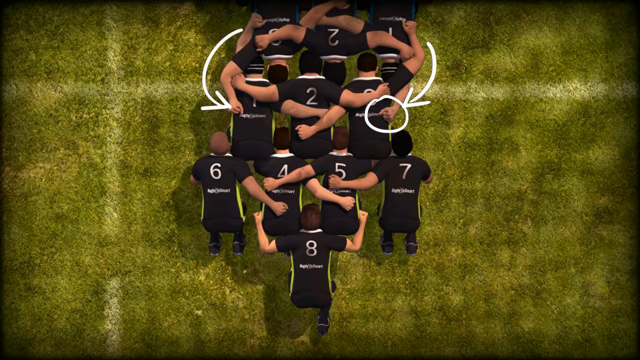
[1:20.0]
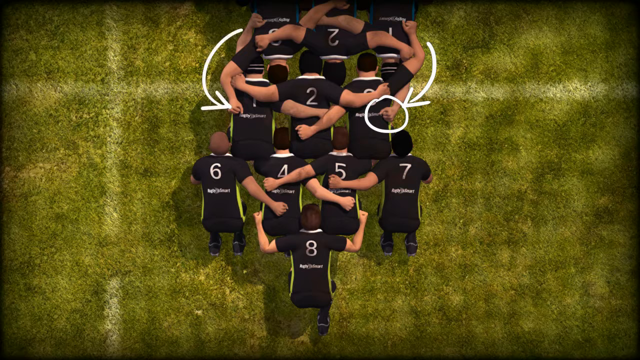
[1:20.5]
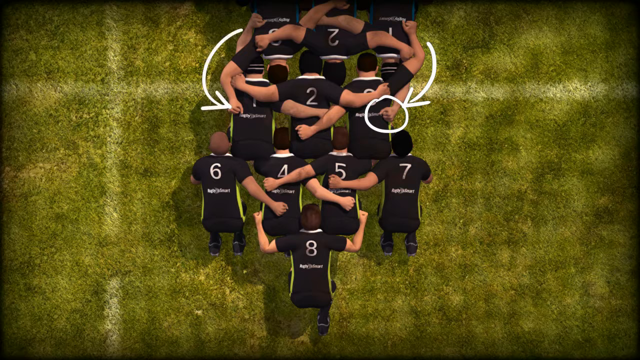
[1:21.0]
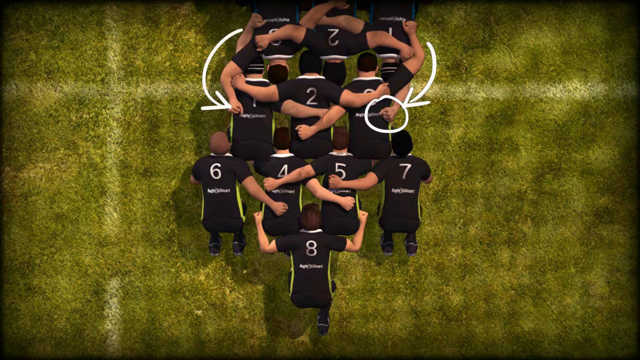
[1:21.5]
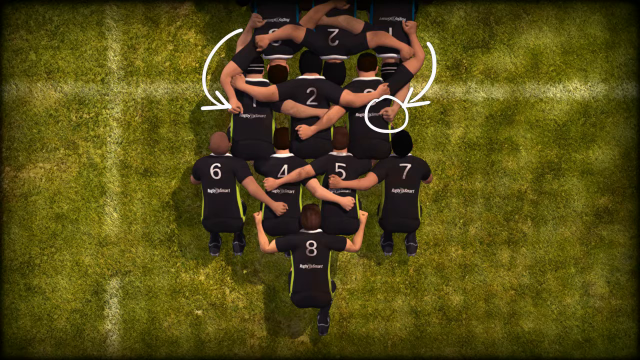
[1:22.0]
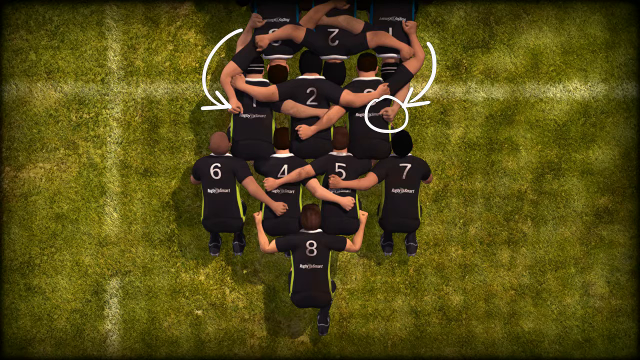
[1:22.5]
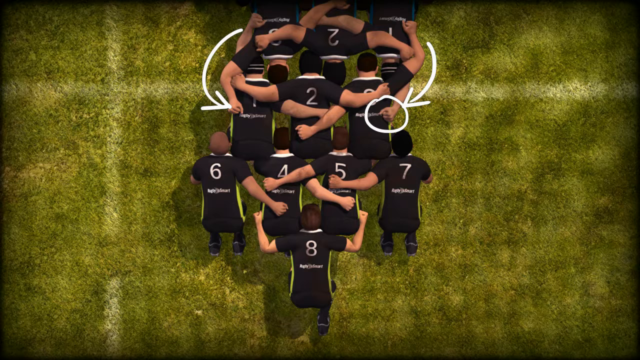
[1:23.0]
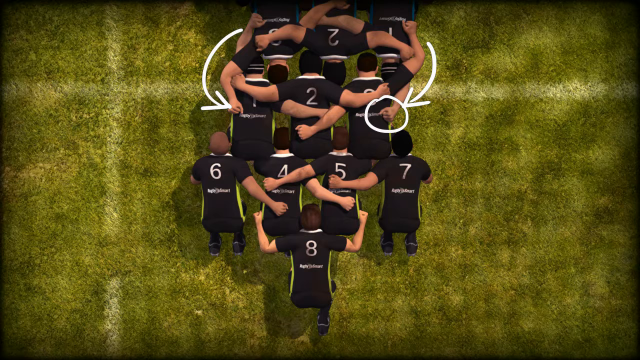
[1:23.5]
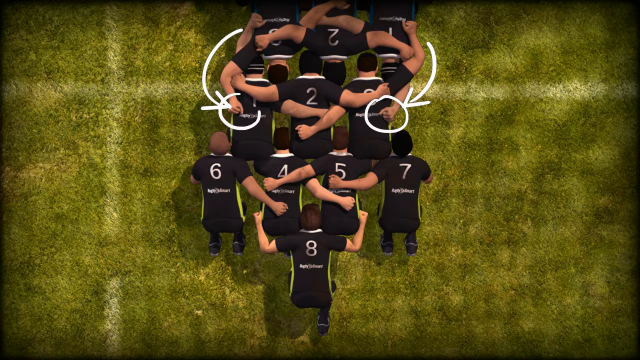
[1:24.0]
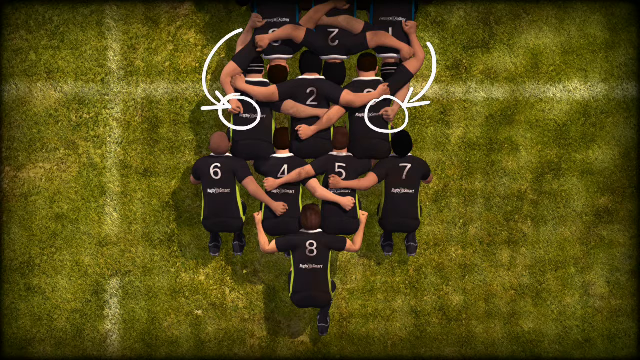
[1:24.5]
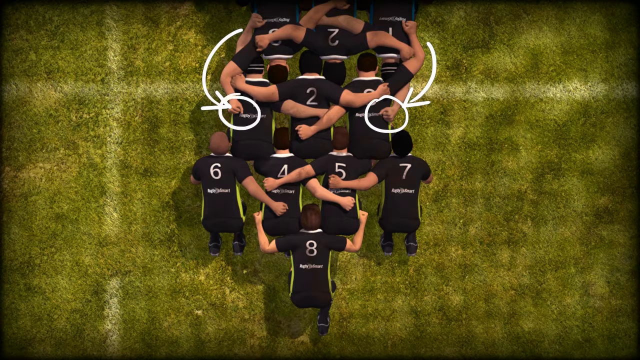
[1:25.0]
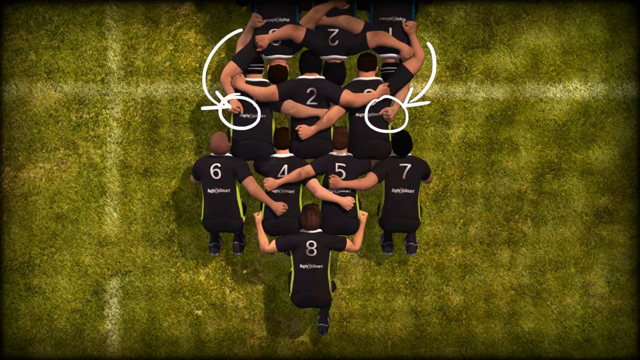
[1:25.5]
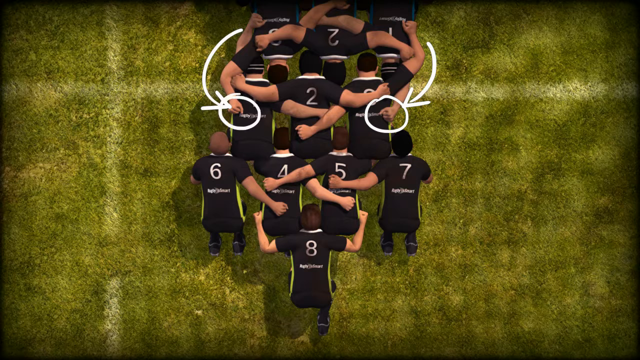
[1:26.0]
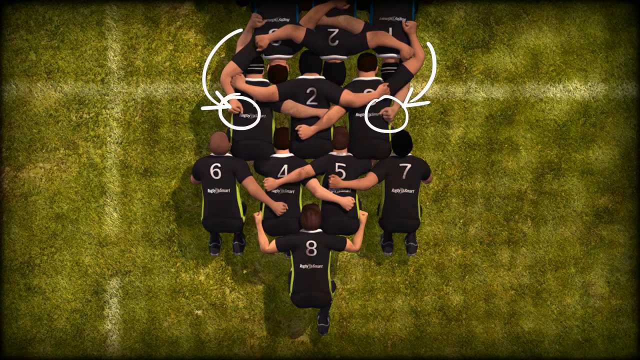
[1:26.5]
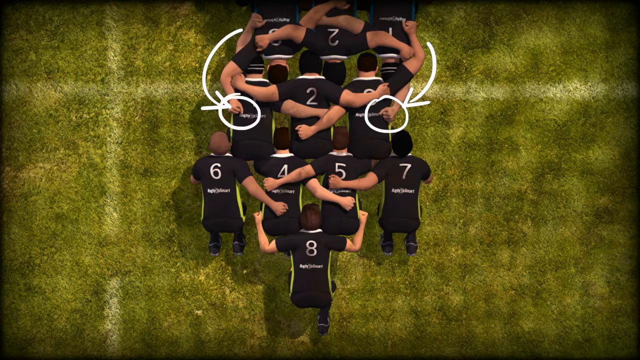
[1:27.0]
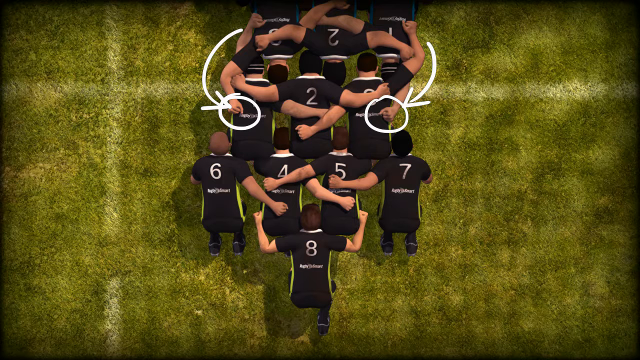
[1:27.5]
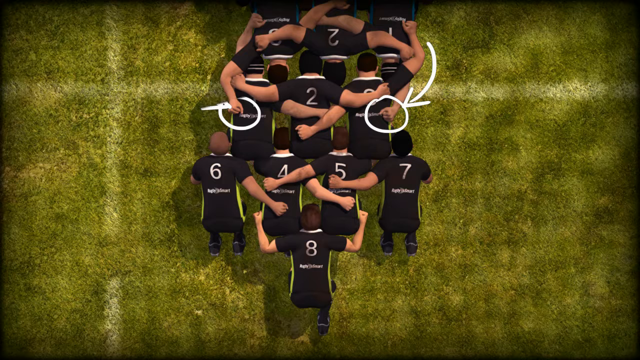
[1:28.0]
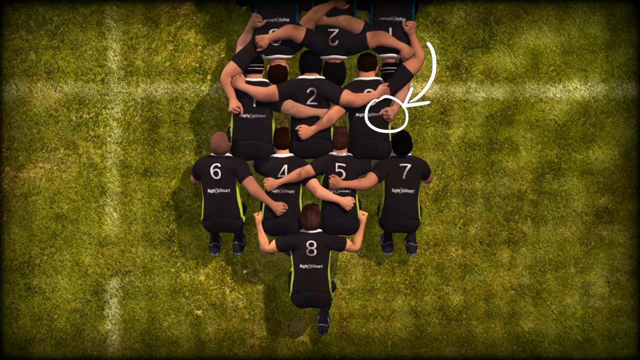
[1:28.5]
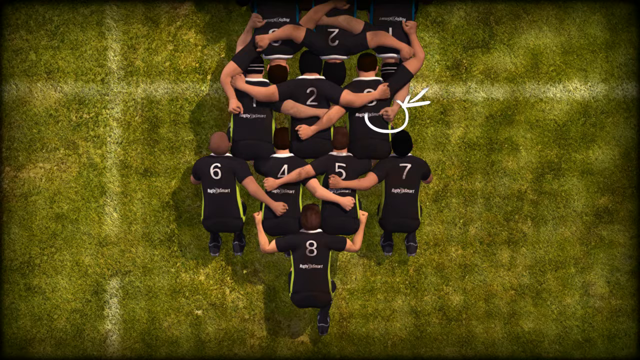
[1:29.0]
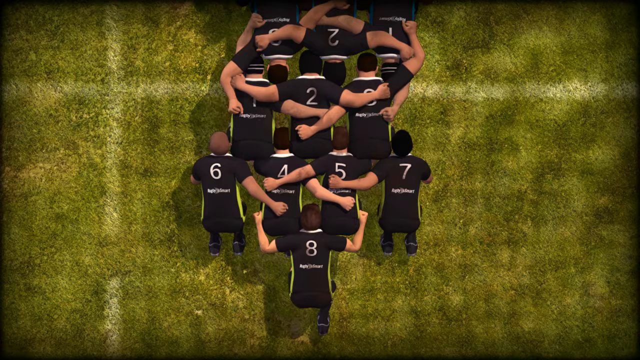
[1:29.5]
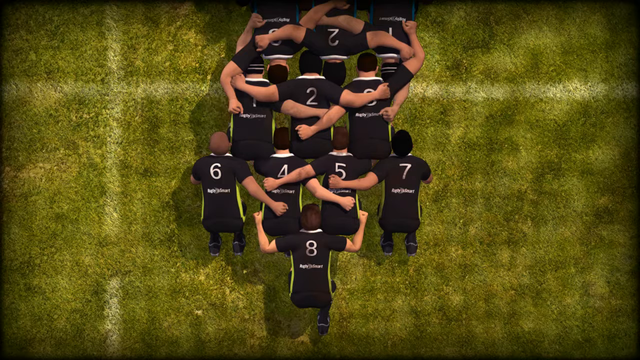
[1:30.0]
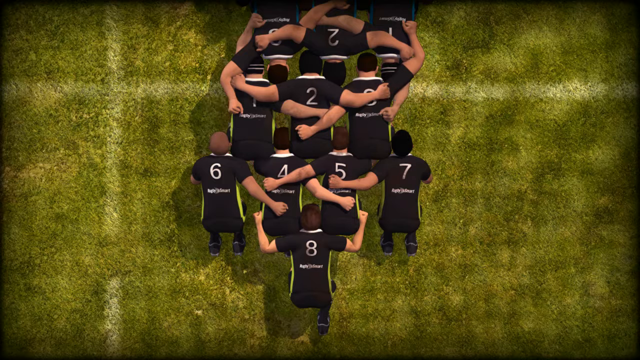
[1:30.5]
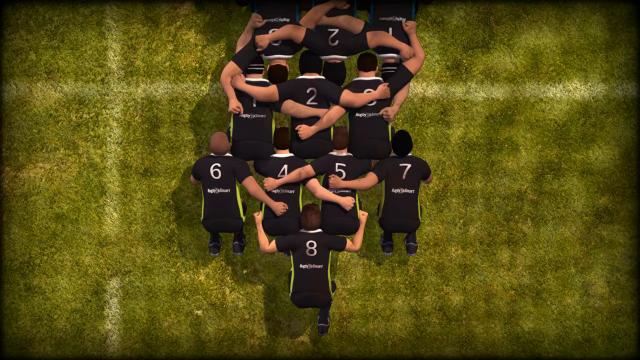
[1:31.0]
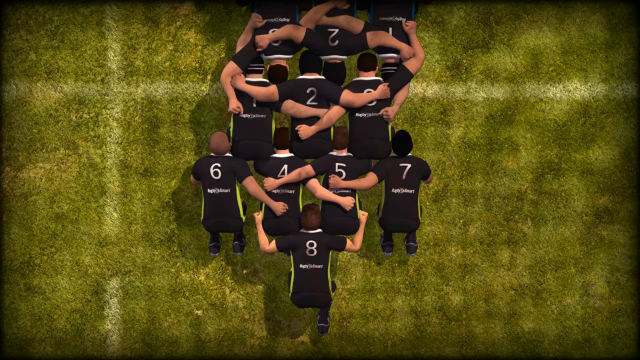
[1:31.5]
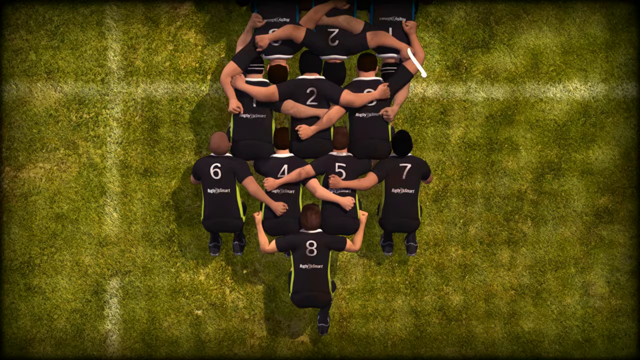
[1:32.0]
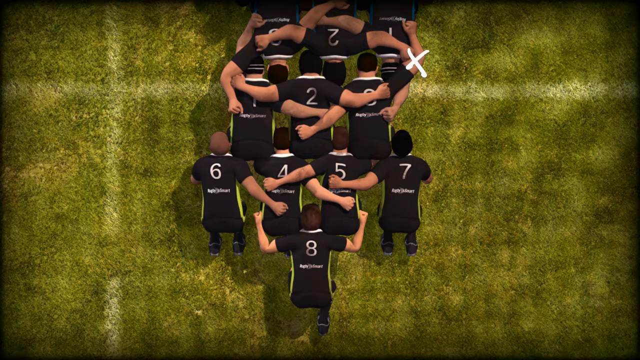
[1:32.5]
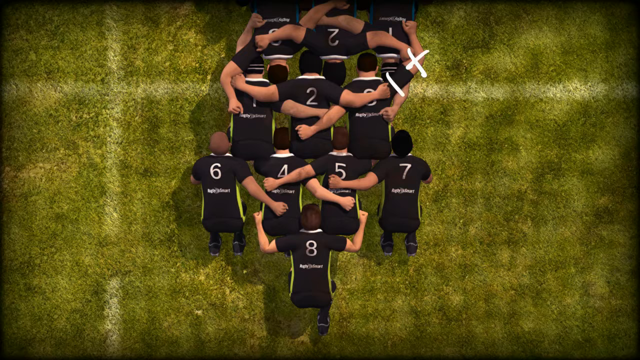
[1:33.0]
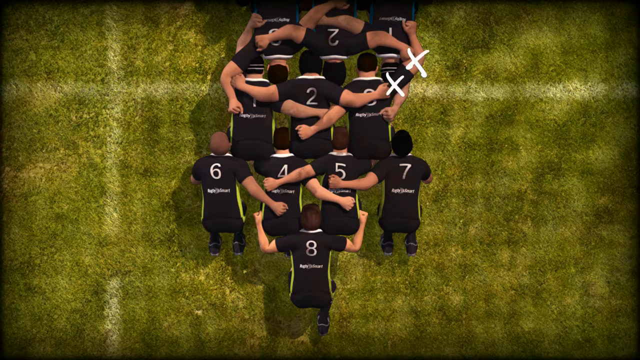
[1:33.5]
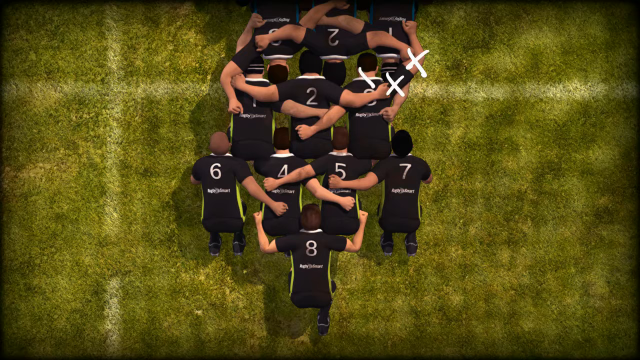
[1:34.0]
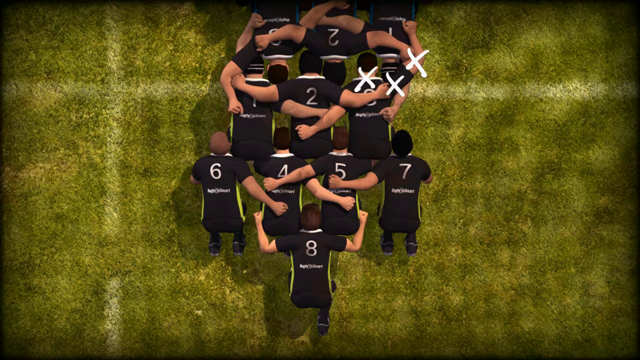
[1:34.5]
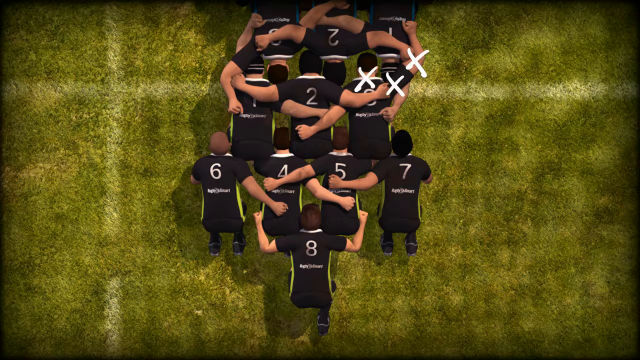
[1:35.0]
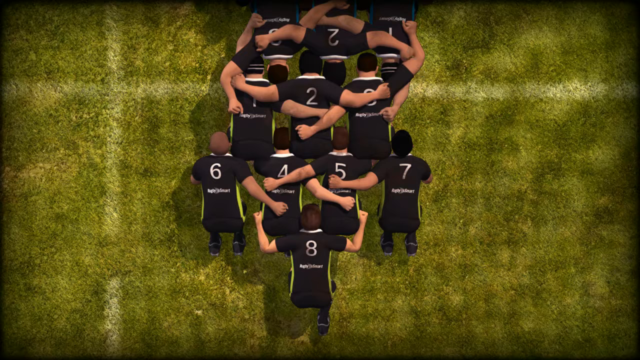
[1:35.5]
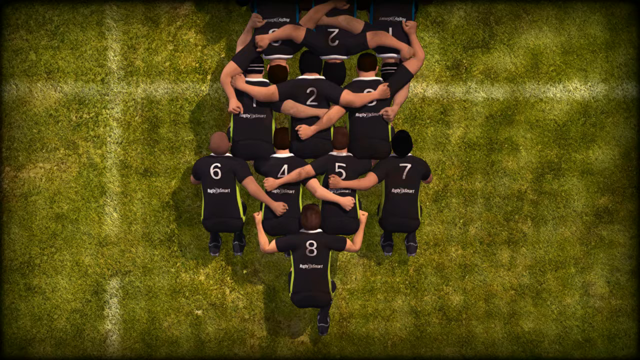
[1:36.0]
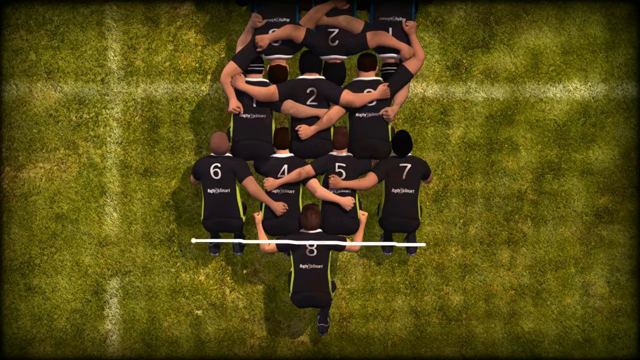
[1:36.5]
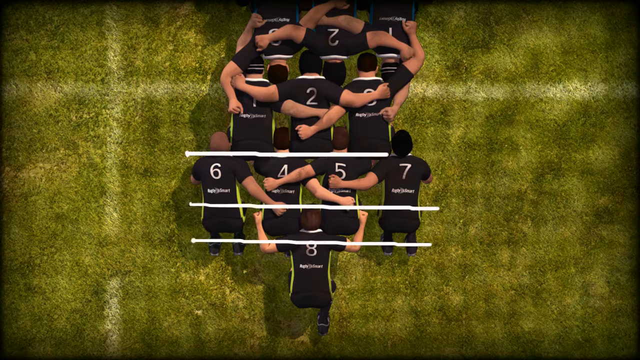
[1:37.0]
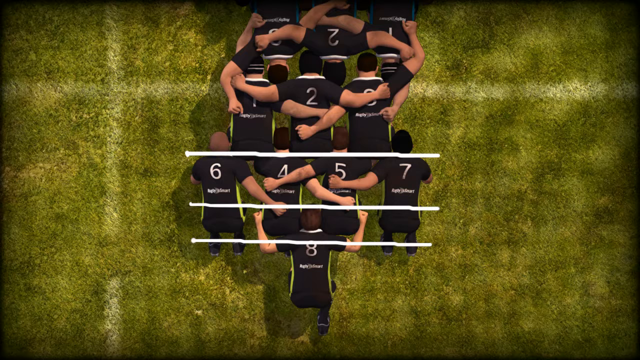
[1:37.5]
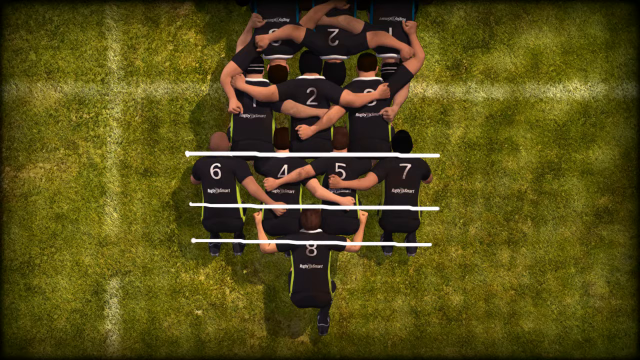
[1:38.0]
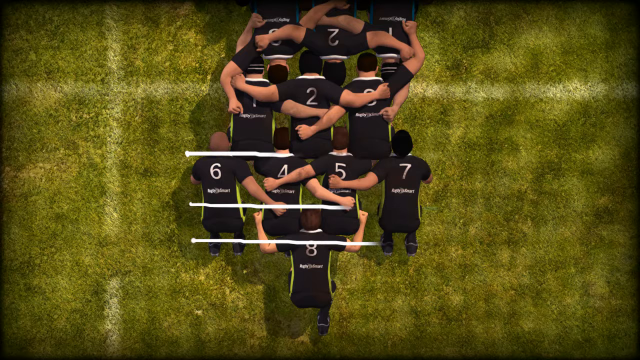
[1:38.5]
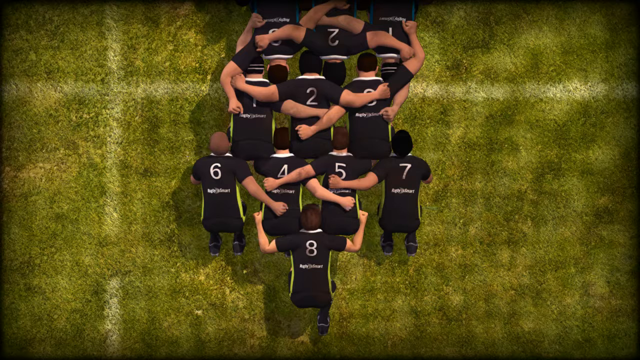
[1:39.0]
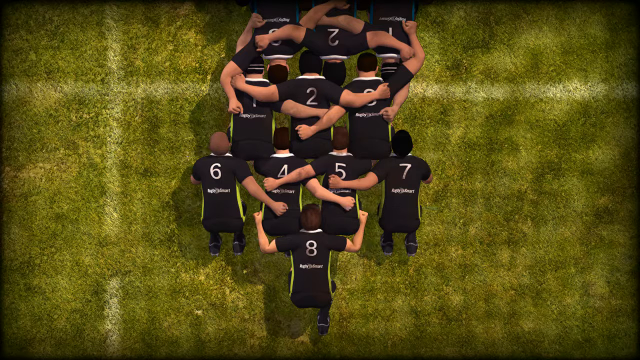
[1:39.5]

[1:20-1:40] The 3D animation of a rugby union scrum continues from a bird's eye view, showing the entirety of one of the teams engaged in the scrum: three players in the front row with their arms interlocked, four players in the second row with their arms interlocked, and one player in the third row with his arms around the waists of two second-row players. Three players on the front line of the opposition team are also visible. A white arrow is drawn from the opposition to the first team's front line. A circle is then drawn around the wrist of one of the opposition players, who has his arm on the back of the front-line player. Next, a number of crosses are drawn on some players, and a number of horizontal lines are drawn.